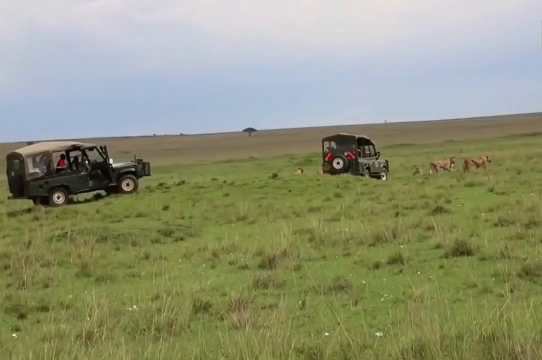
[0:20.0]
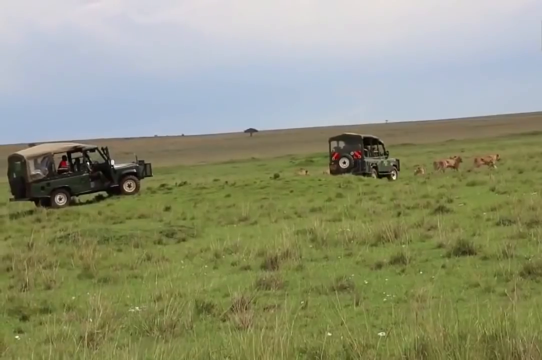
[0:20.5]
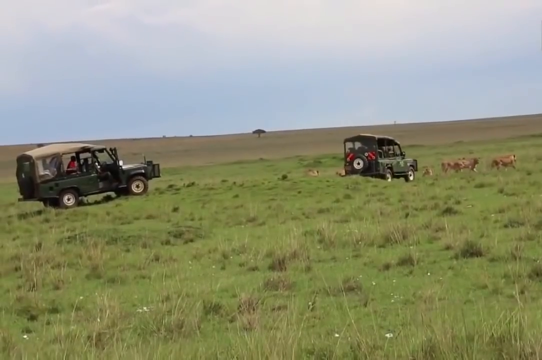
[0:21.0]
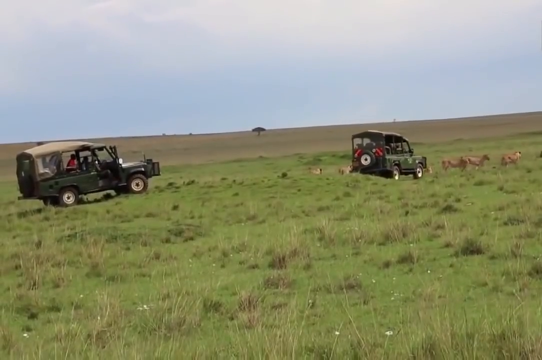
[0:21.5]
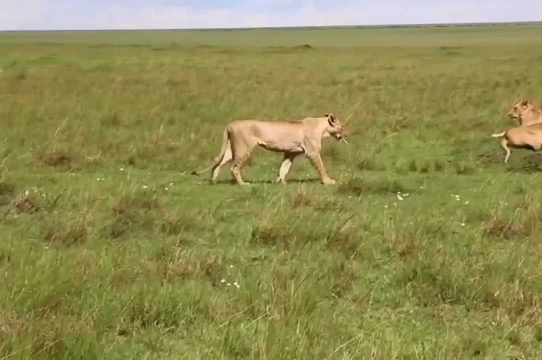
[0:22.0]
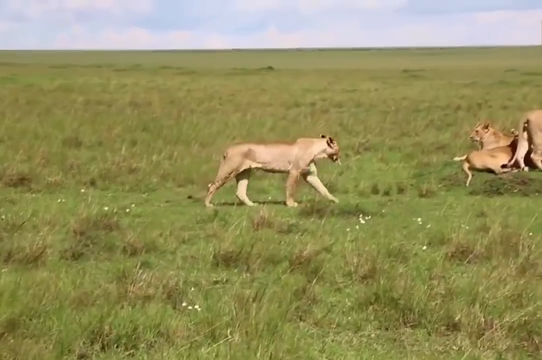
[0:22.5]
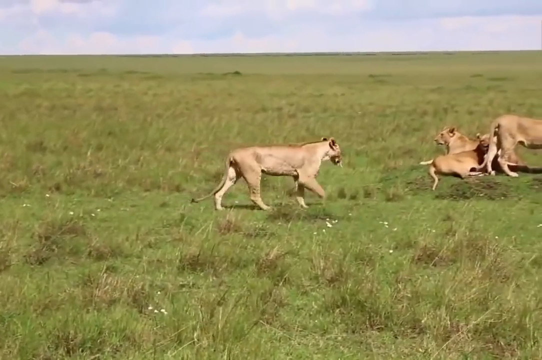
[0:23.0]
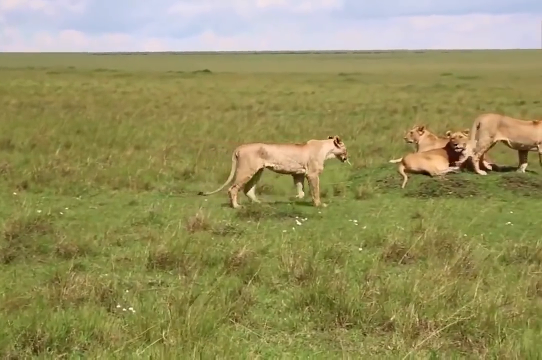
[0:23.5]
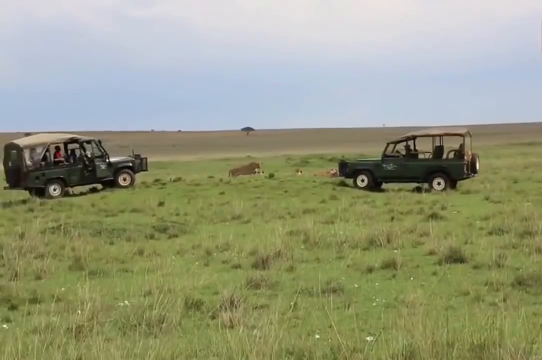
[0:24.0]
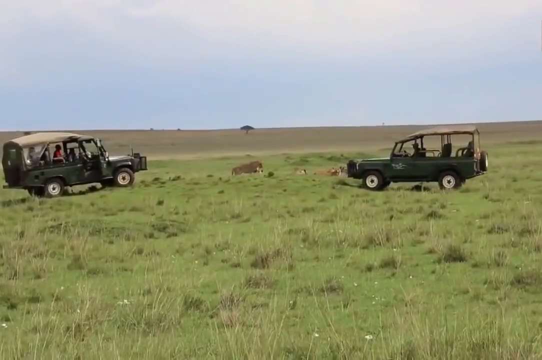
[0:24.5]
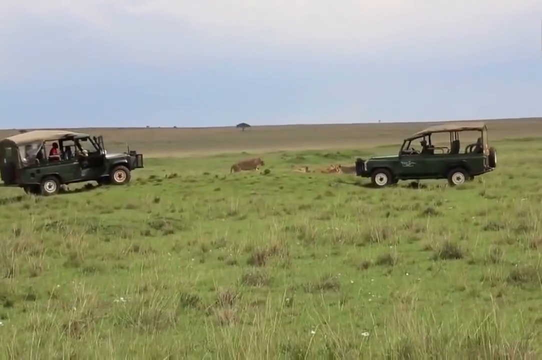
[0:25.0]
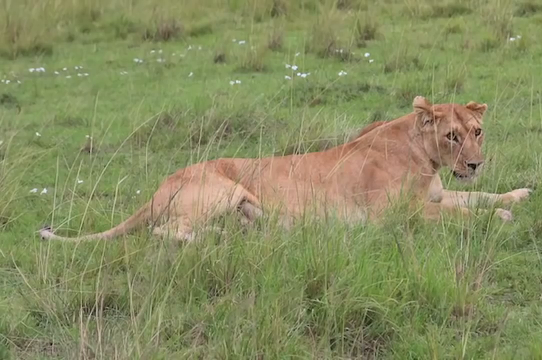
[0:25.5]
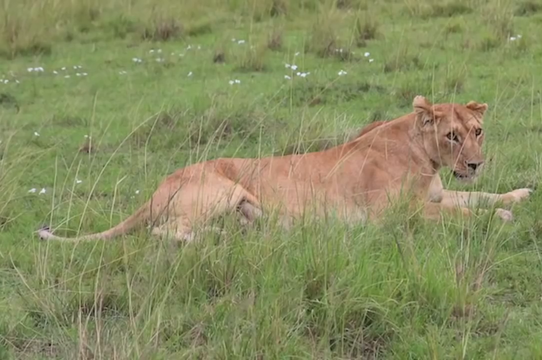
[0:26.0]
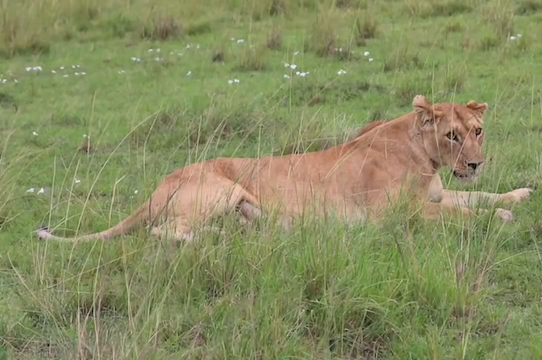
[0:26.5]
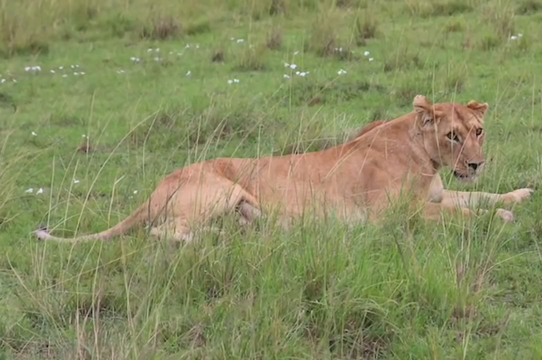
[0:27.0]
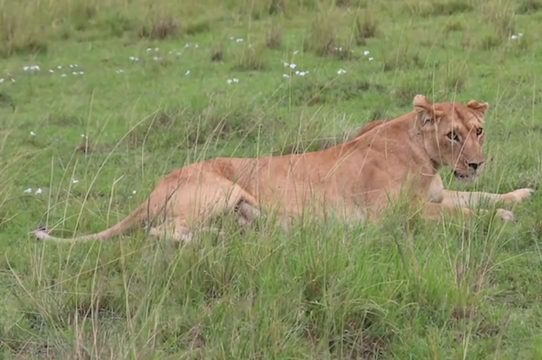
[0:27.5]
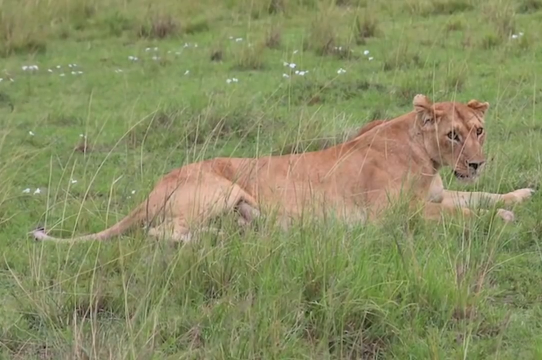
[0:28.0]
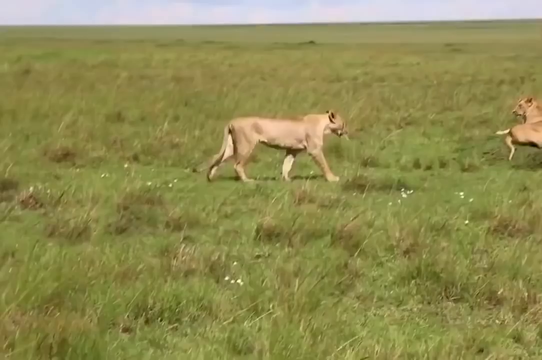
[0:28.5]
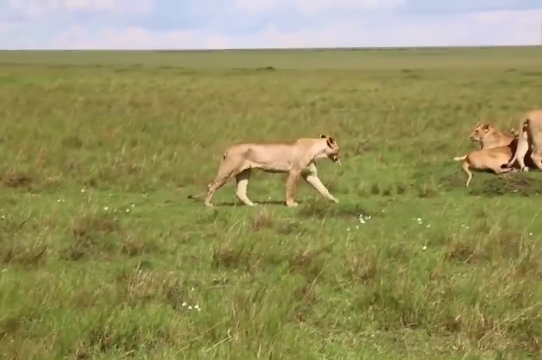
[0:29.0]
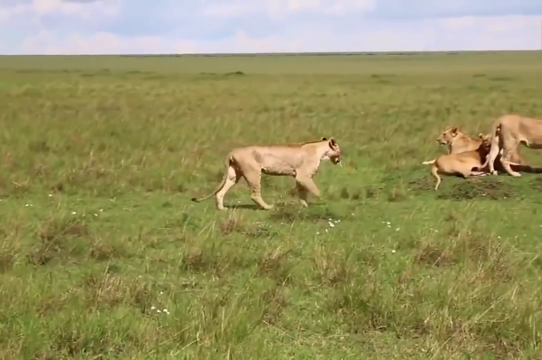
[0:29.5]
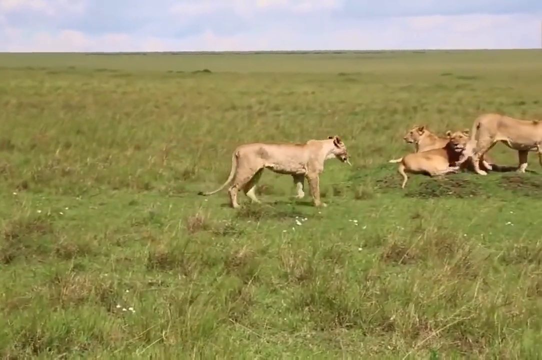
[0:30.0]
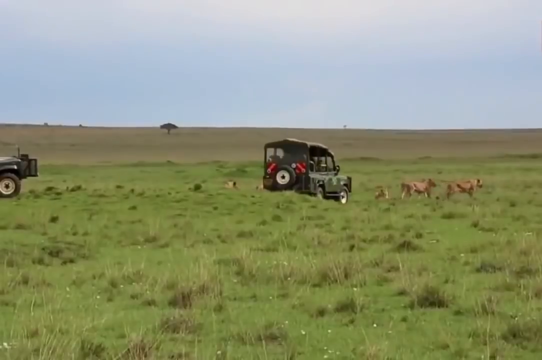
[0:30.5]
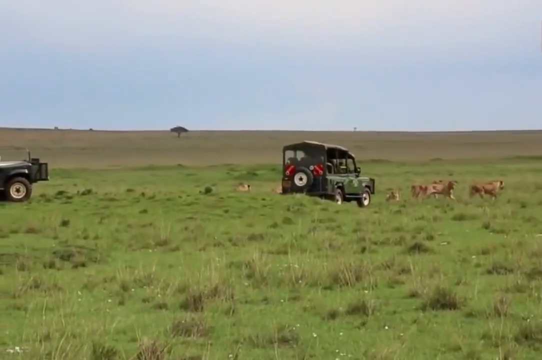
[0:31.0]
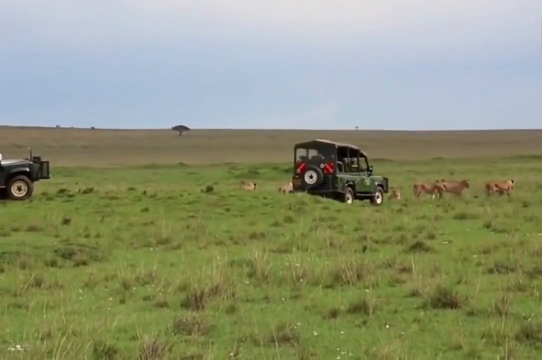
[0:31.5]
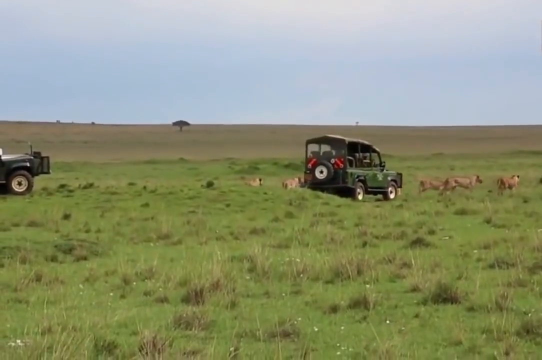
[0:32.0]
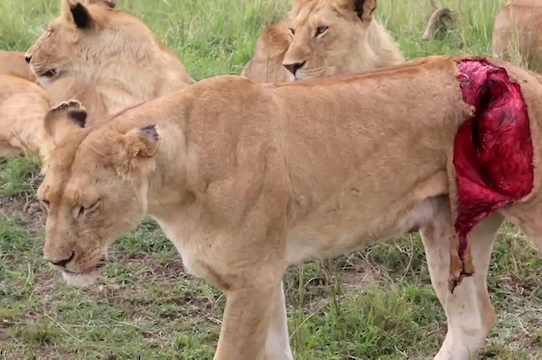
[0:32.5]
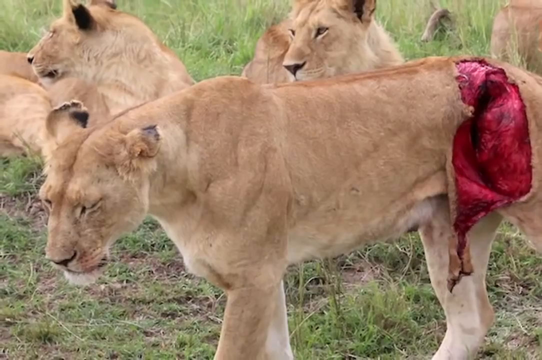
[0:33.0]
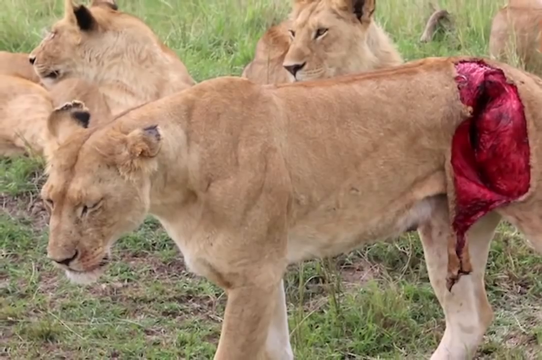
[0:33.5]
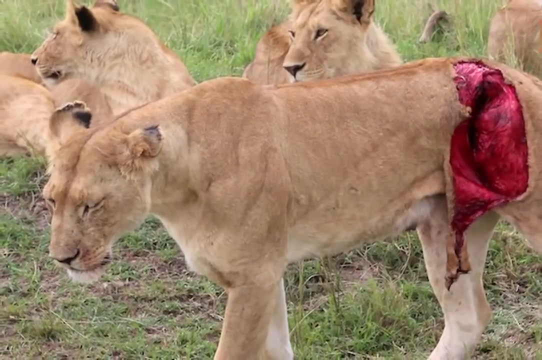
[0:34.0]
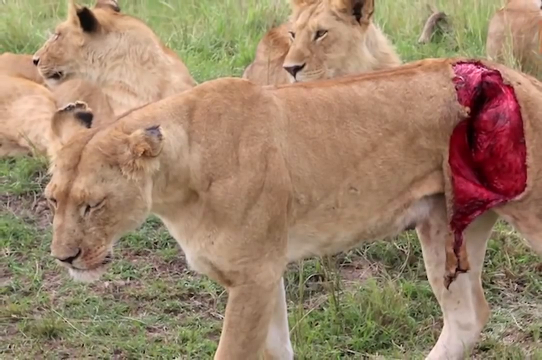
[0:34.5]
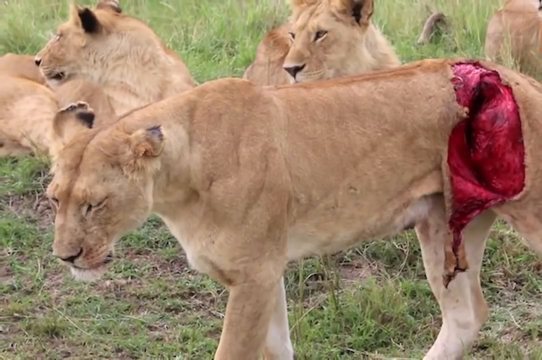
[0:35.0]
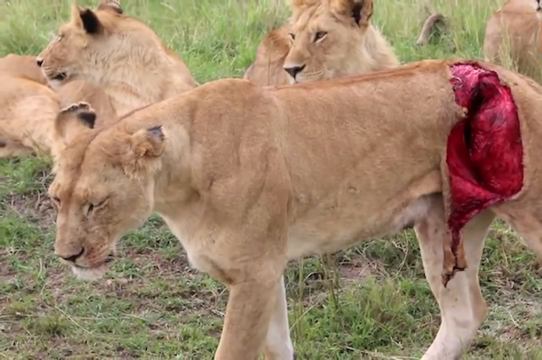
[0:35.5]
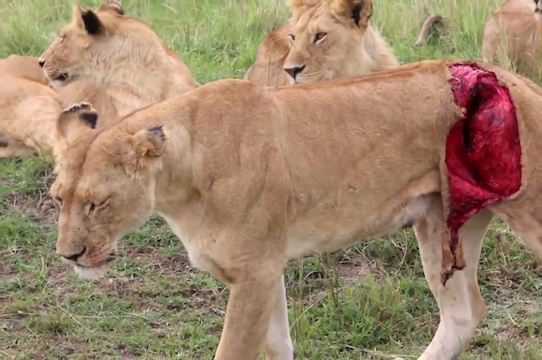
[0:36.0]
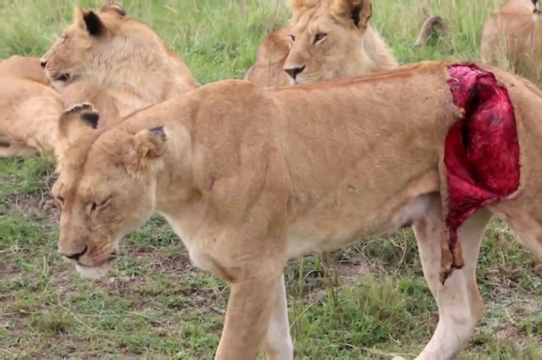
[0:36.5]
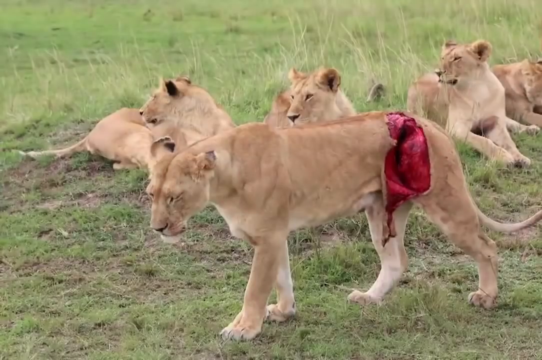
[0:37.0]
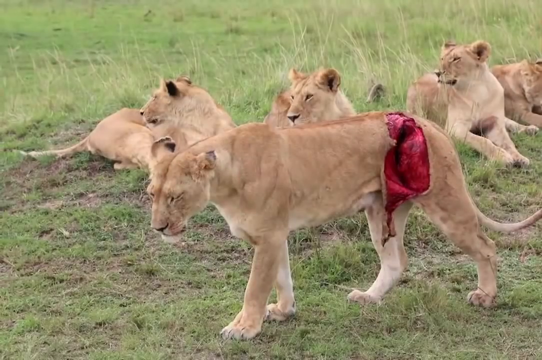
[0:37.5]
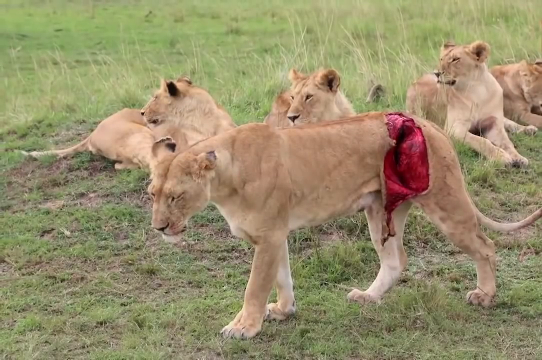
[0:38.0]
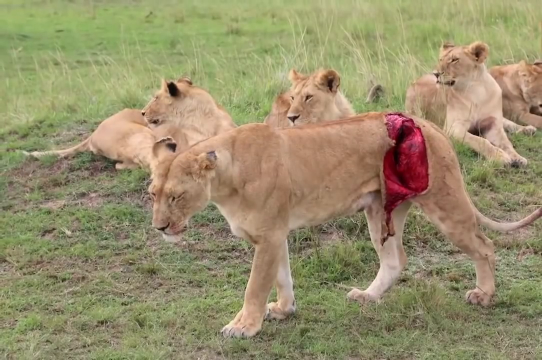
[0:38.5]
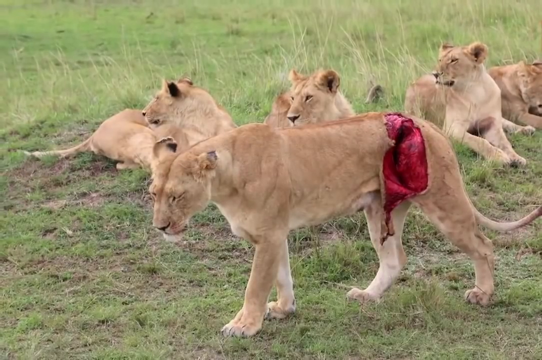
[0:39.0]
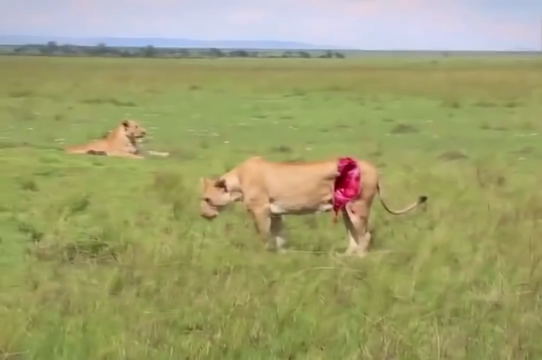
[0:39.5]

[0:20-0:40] Two green vehicles with people inside are driven into a field filled with green grass under a clear blue sky. Lions are in the field: some lie down, some stand, and some walk around the very green grassy environment. The focus shifts to the wounded lion, which is standing, and it is shown in a closer look from different angles. The wound is very fresh and open.